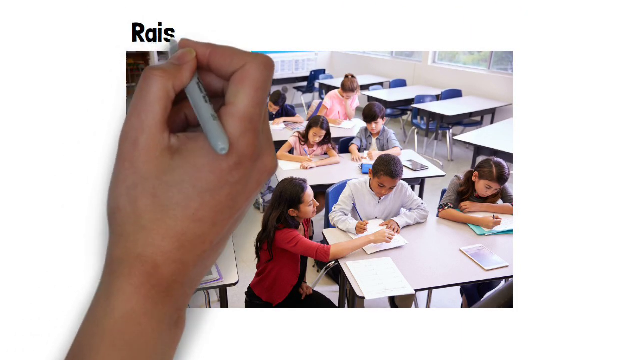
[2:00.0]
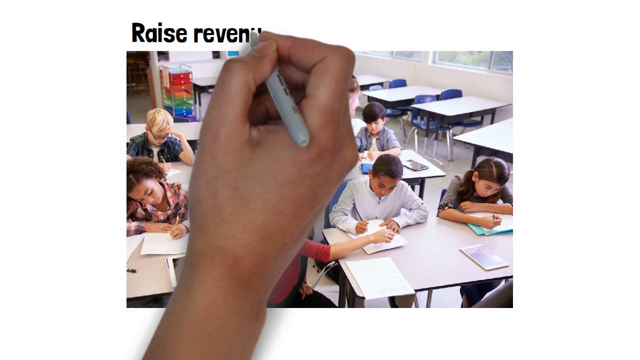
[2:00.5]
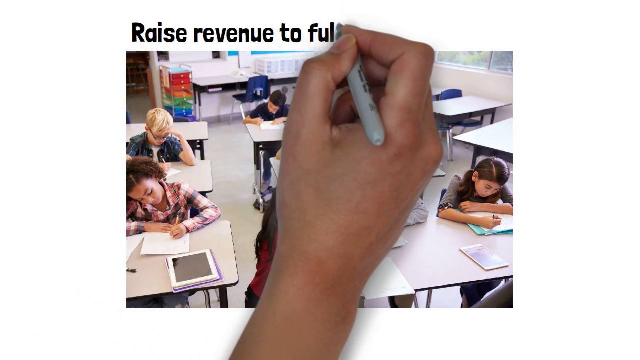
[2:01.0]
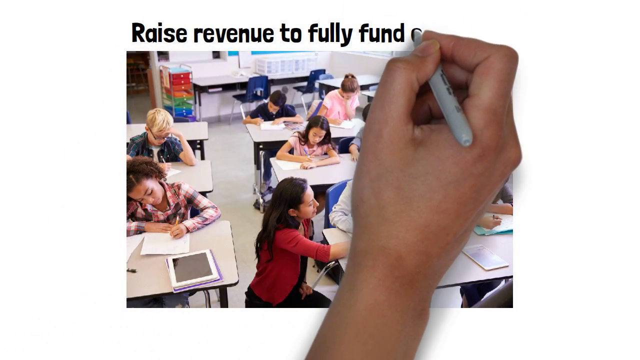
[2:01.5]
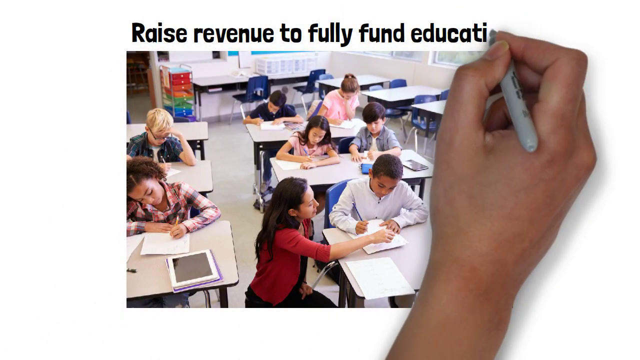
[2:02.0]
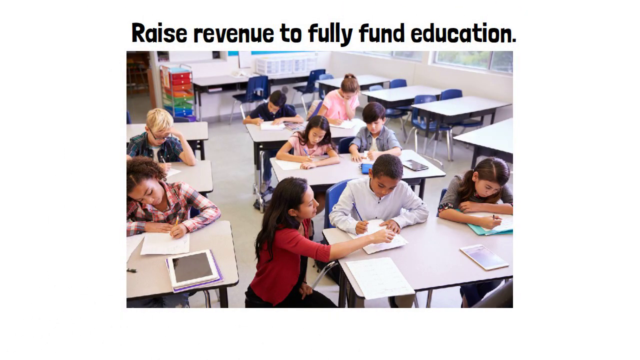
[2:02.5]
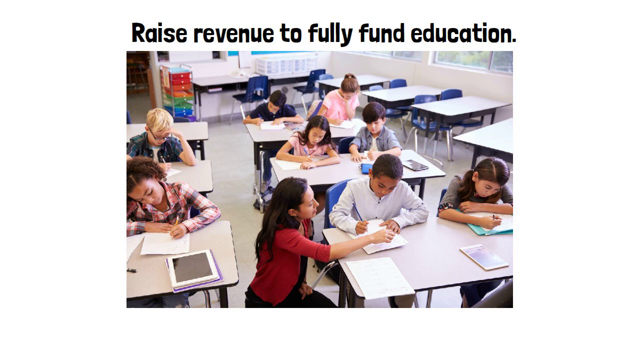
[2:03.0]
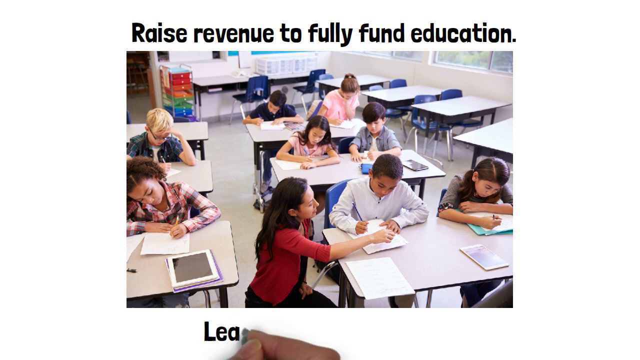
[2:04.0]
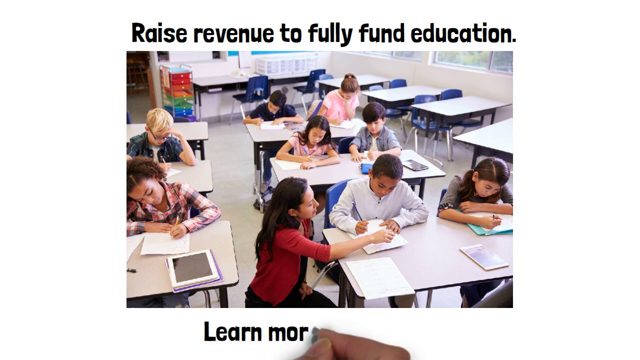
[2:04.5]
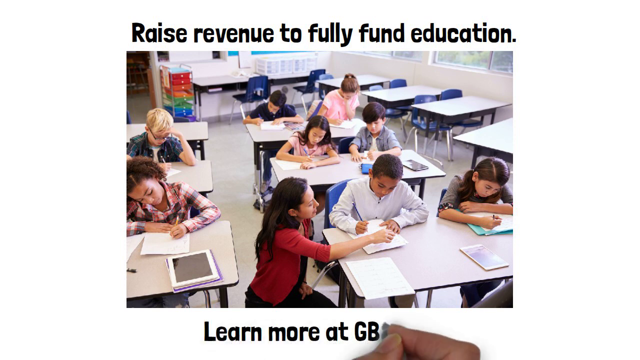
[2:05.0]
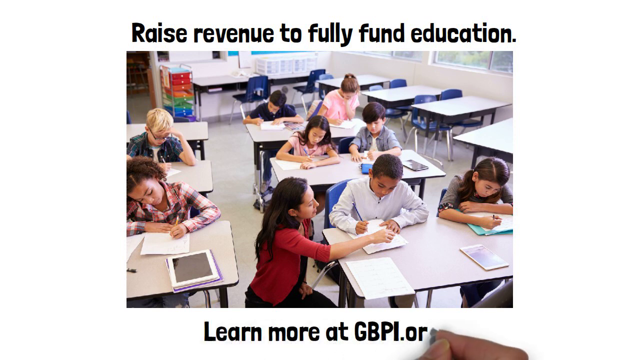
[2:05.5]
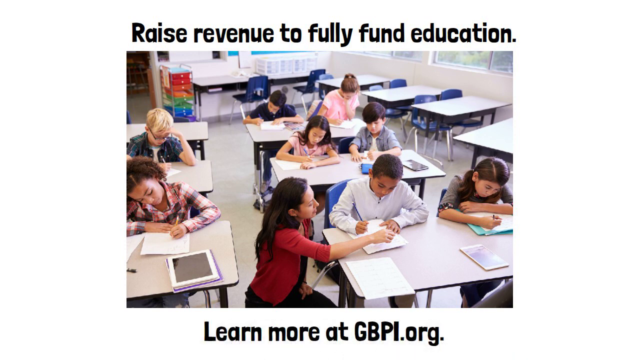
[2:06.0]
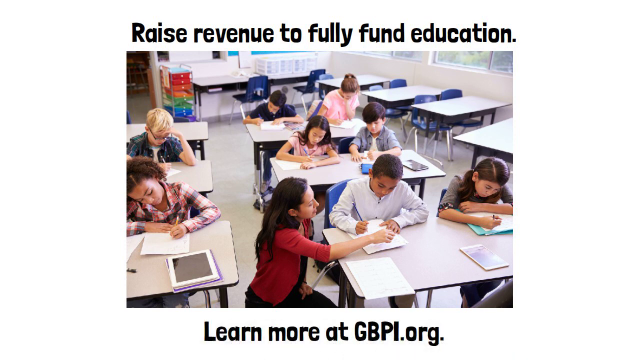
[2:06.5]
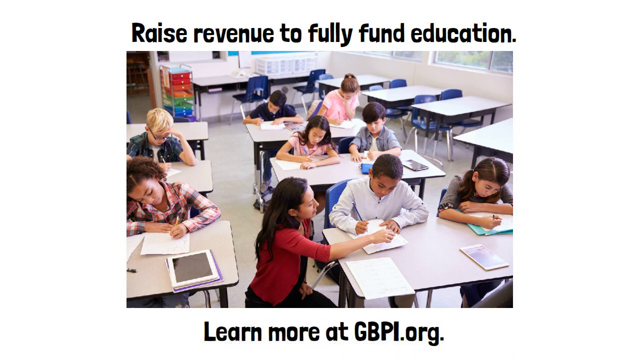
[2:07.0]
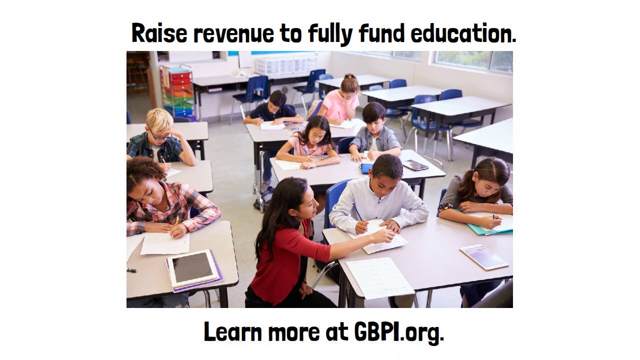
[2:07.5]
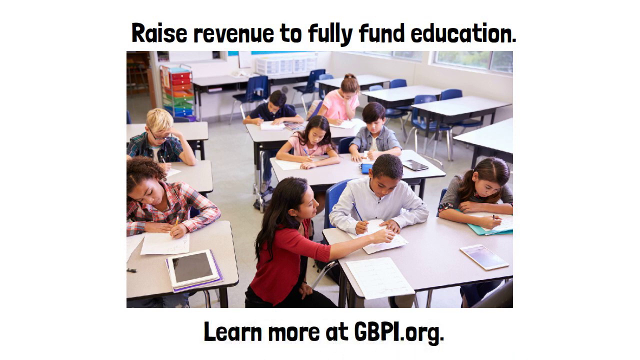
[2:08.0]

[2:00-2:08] The hand appears and moves above the image in the center, writing "raise revenue to fully fund education" in black text. Below, it writes "learn more at gbpi.org" in black text at the bottom of the screen, underneath the image of the classroom kids with the teacher. The classroom has blue chairs and desks that fit two students at each one. The background behind everything is white. This is shown for a few seconds before the video ends.